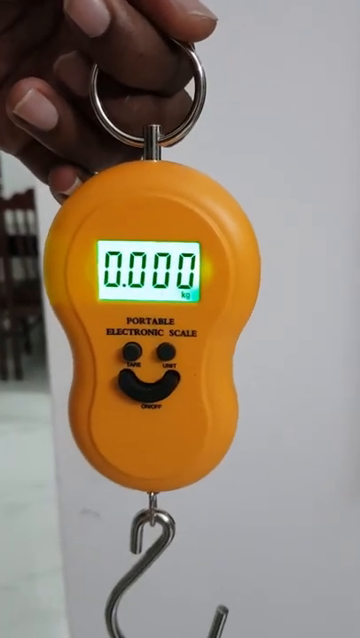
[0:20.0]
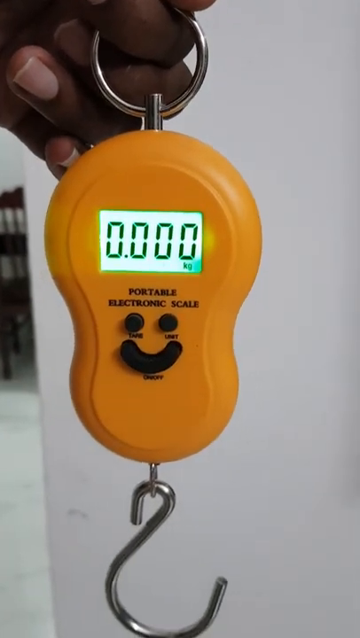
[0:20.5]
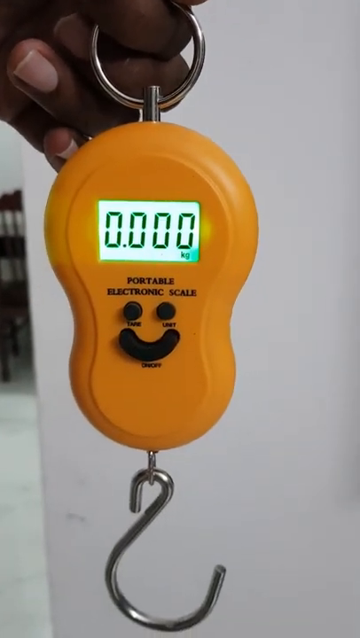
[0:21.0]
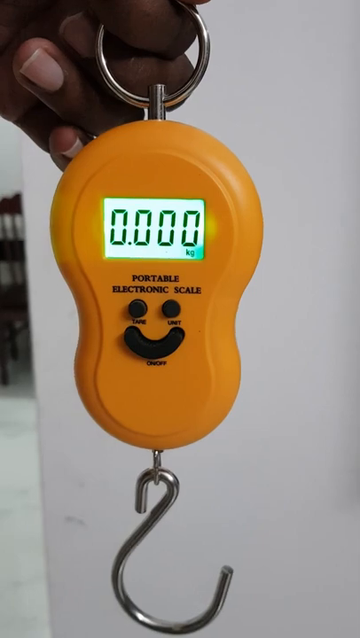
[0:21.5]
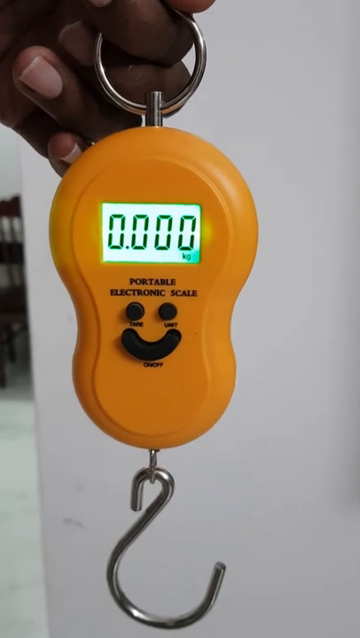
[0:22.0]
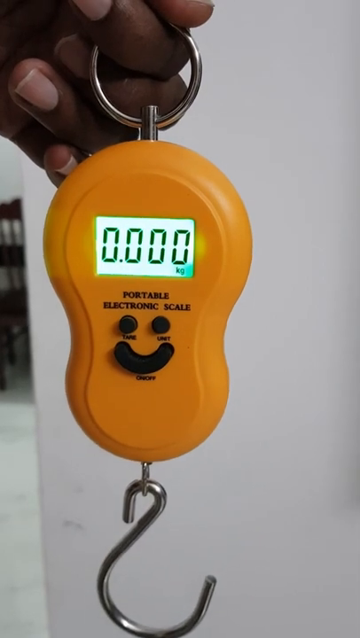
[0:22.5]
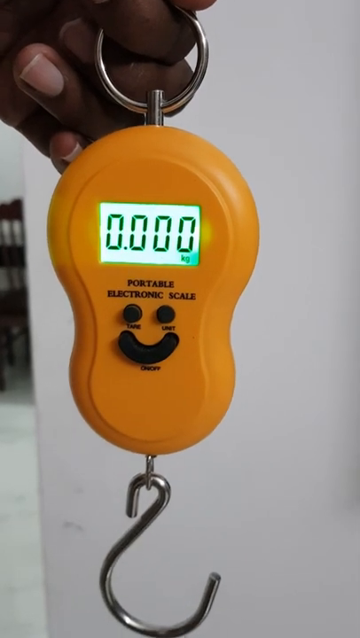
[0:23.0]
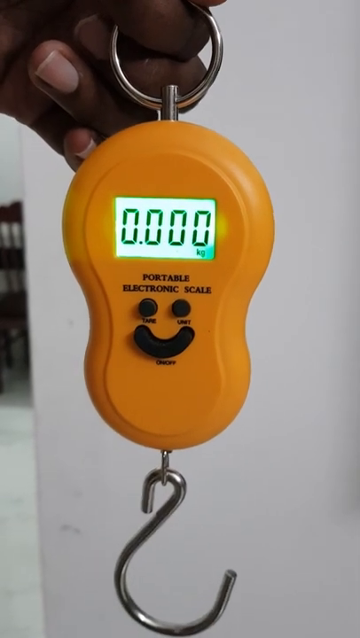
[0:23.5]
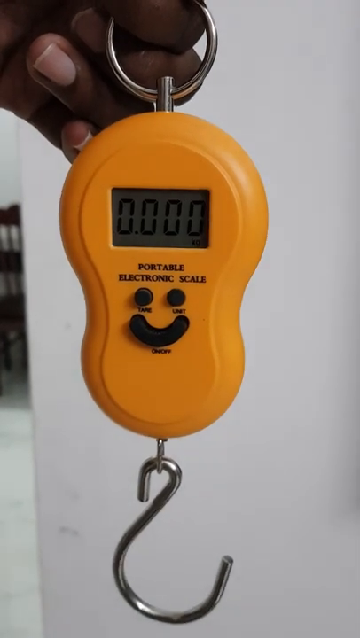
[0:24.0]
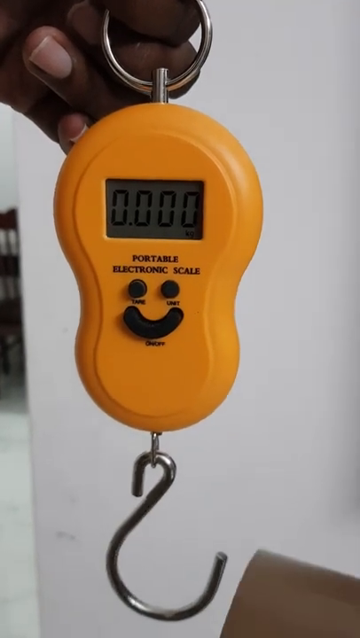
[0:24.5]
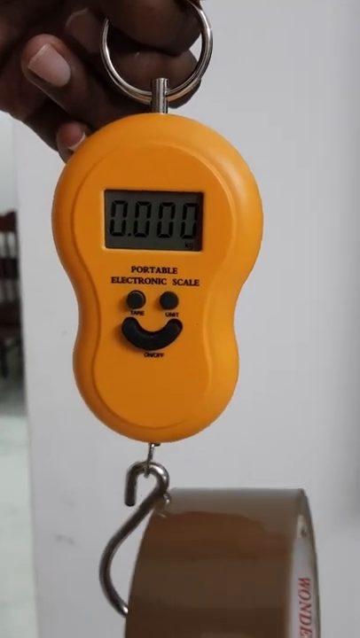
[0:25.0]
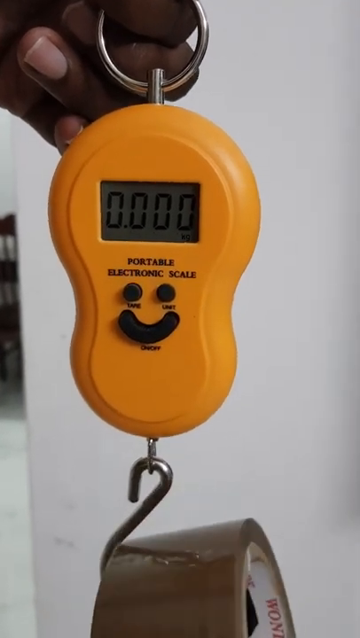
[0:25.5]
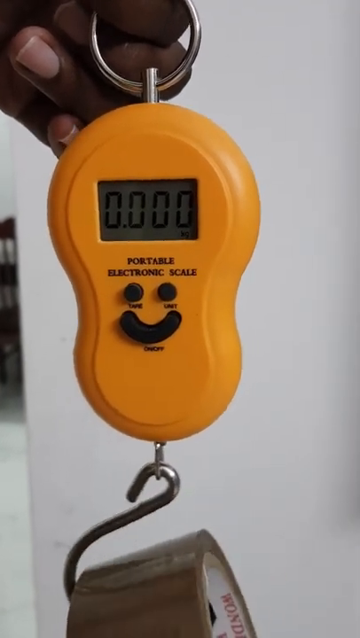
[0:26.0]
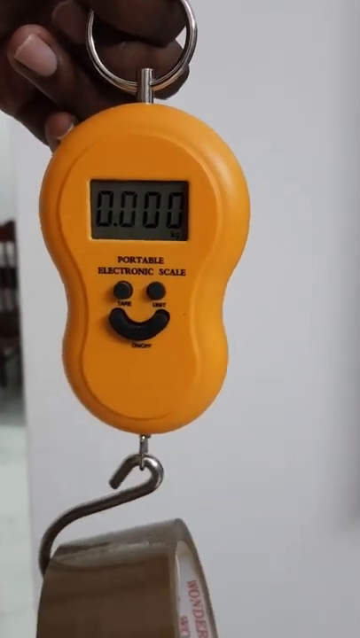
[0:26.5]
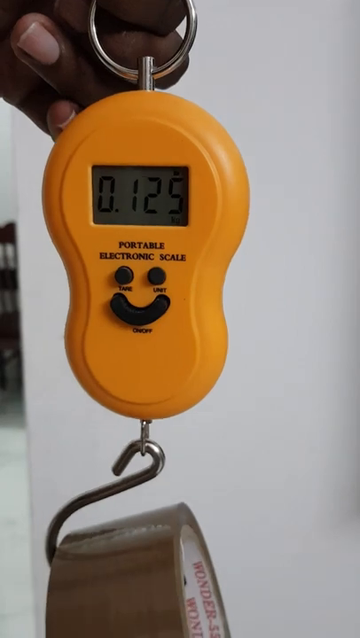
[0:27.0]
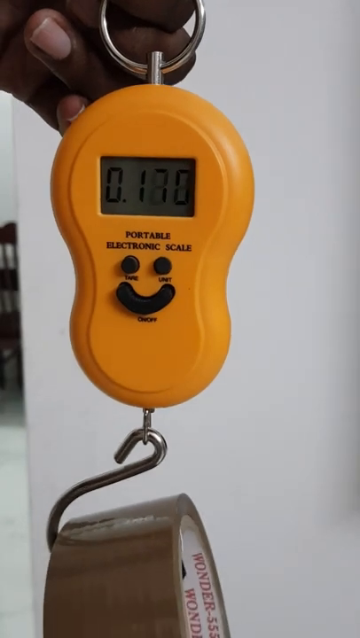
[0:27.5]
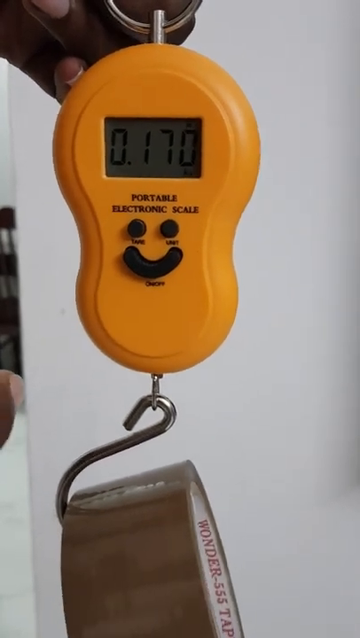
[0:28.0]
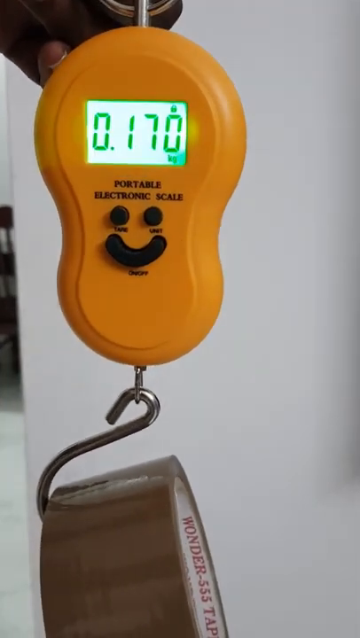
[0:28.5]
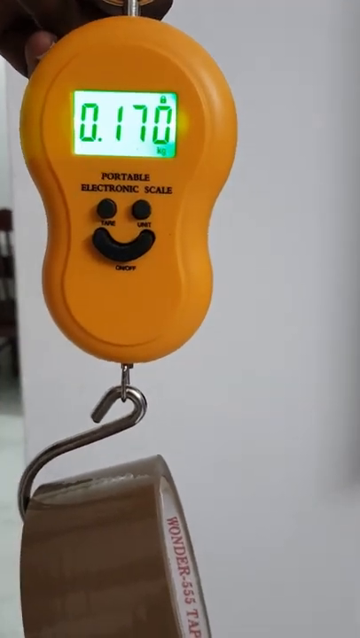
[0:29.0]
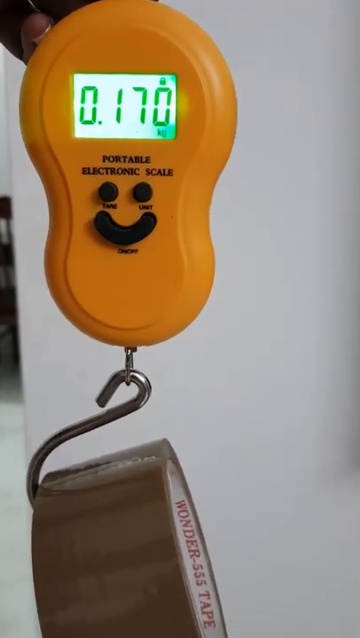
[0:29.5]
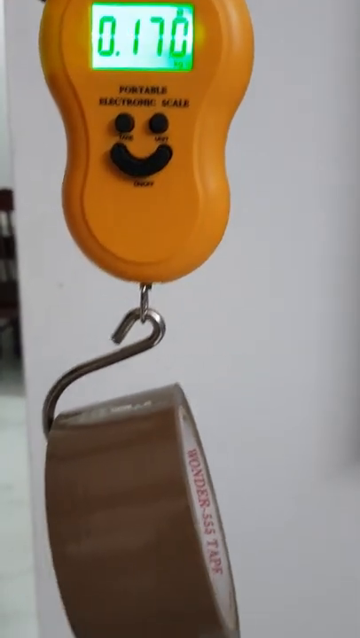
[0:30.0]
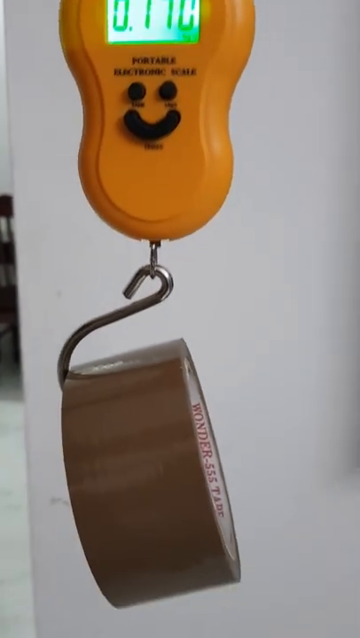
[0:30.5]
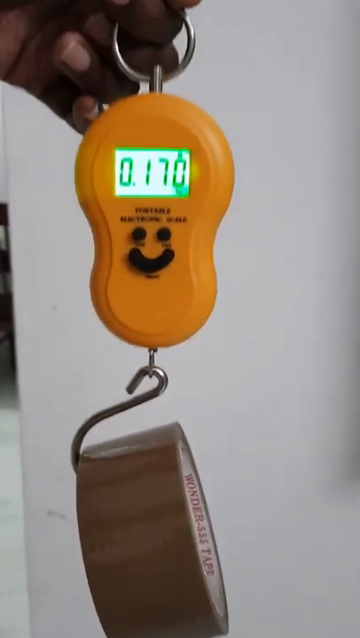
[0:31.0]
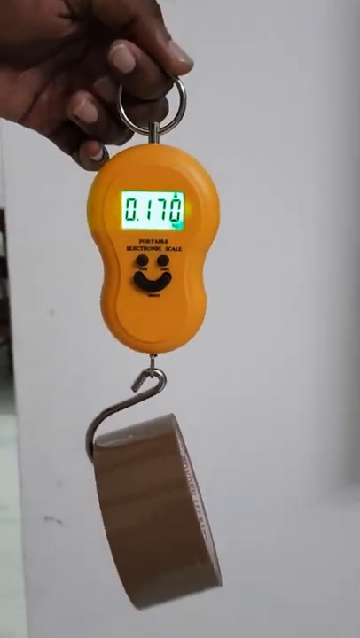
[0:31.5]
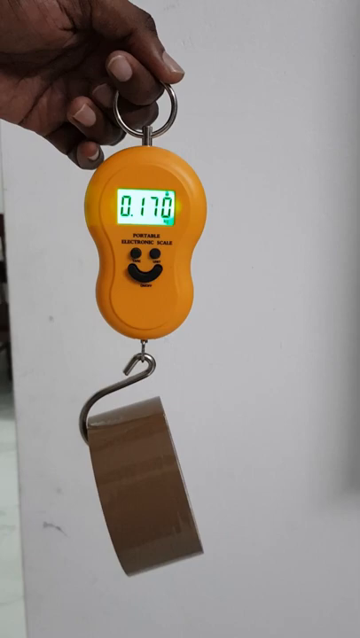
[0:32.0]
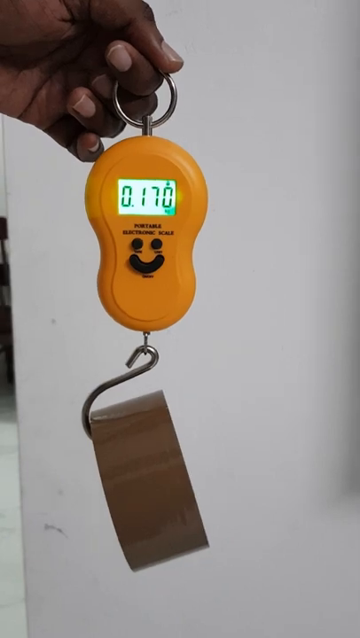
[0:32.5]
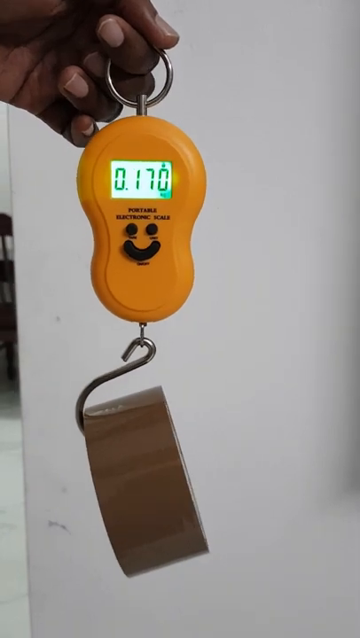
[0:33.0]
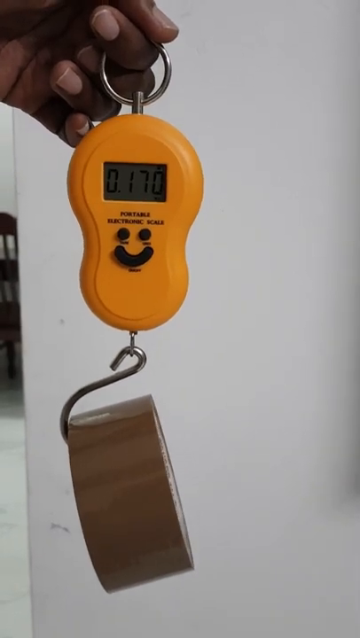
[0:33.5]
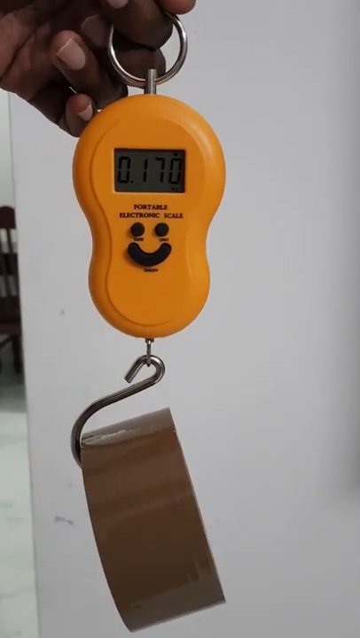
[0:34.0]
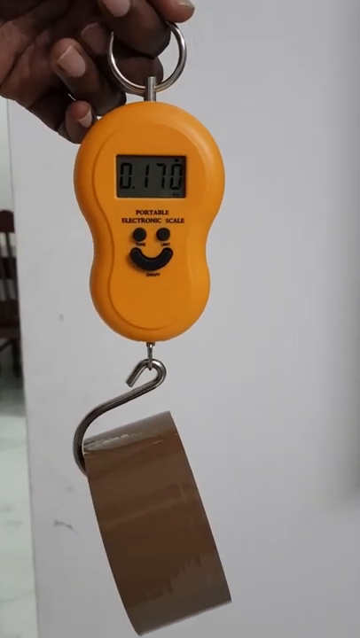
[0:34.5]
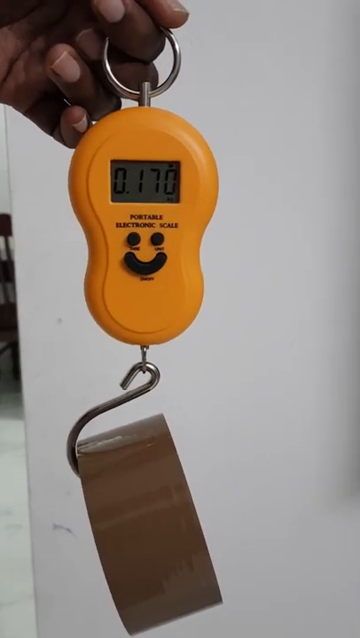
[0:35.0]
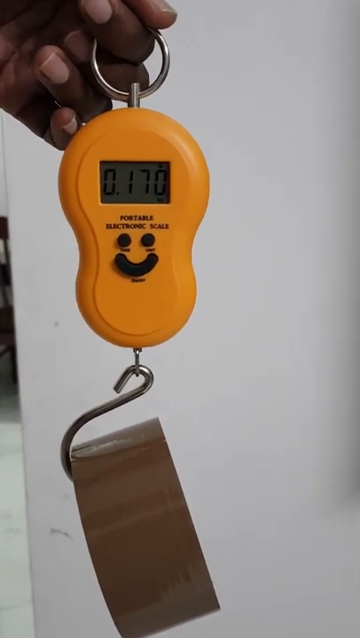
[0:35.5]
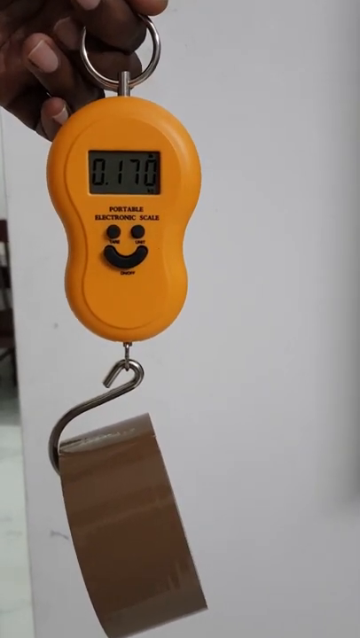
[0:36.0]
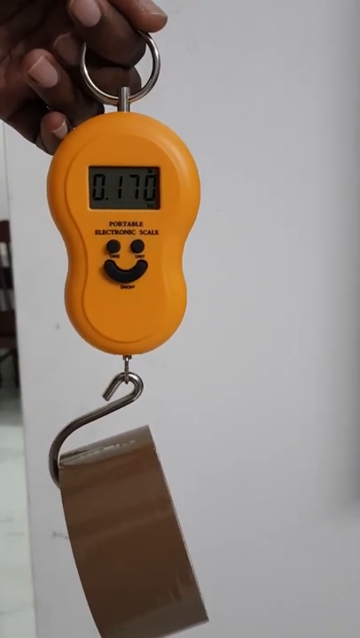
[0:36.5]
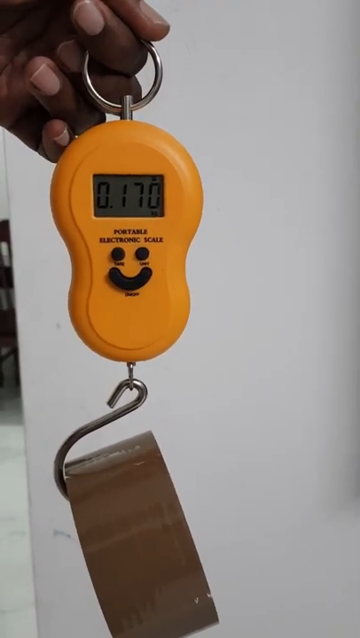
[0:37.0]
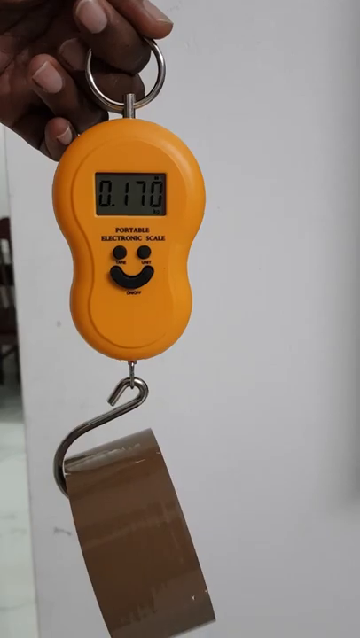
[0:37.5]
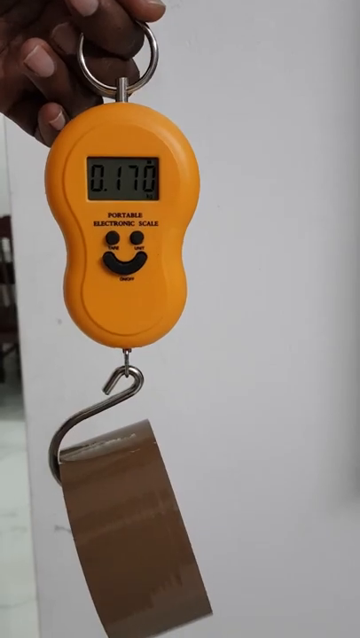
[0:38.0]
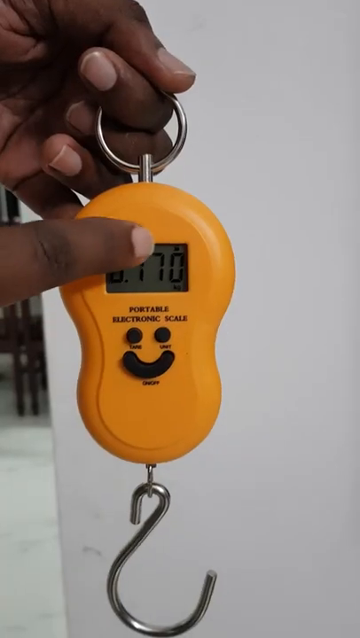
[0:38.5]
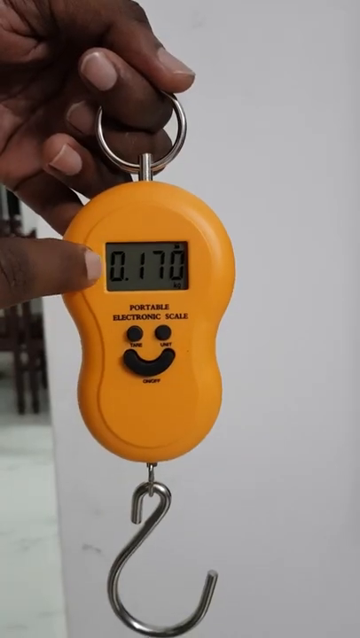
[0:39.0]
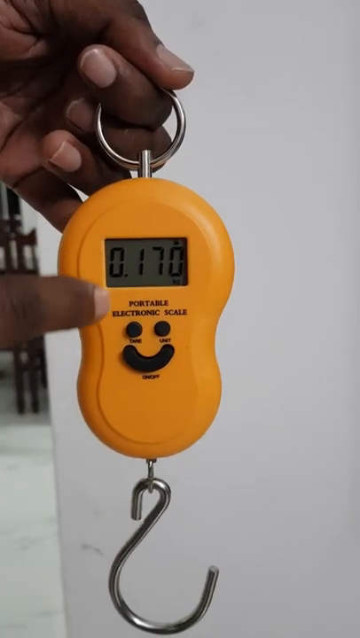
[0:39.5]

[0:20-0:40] The person has put a roll of tape, either duct tape or packaging tape, on the hook of the handheld scale and shows its weight. The scale reads .170 kilograms for the roll of tape. The scale has a ring on the top.